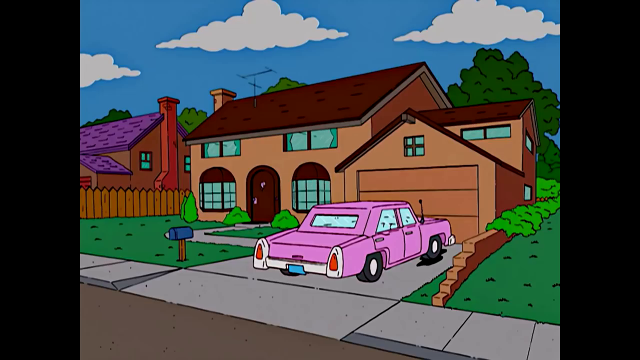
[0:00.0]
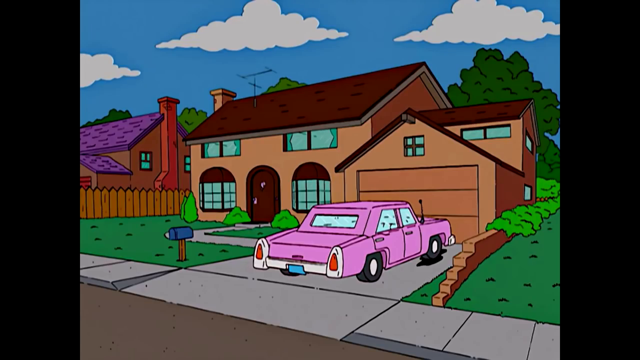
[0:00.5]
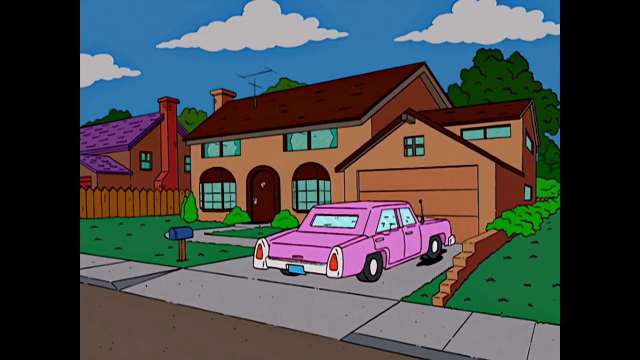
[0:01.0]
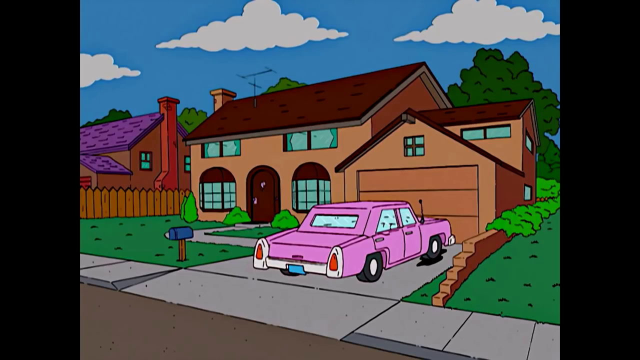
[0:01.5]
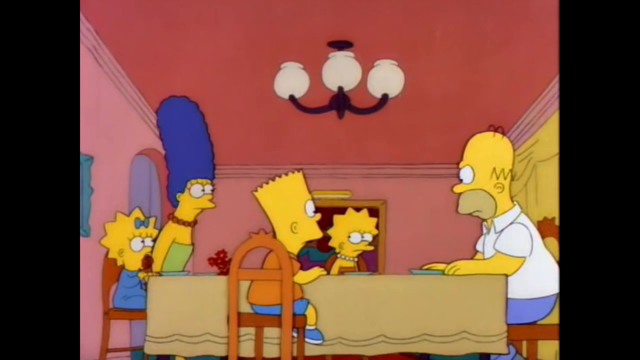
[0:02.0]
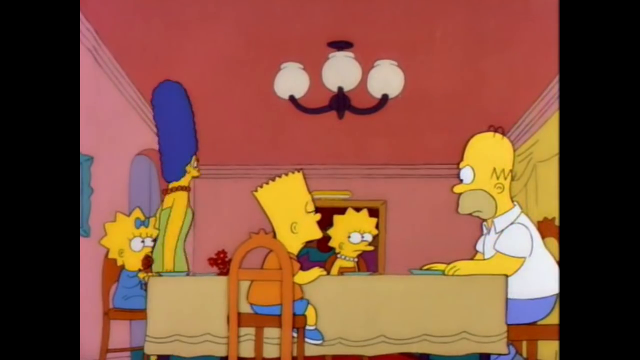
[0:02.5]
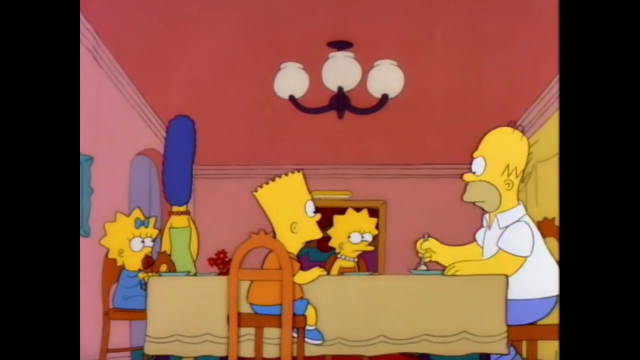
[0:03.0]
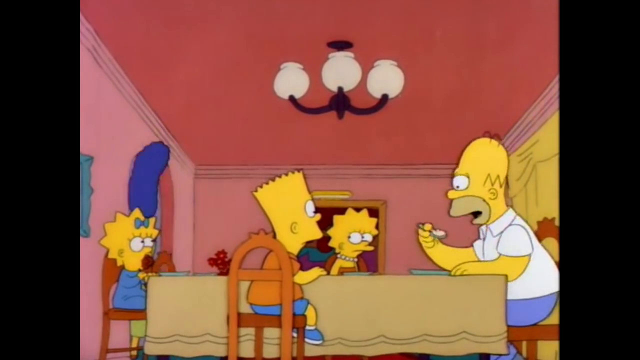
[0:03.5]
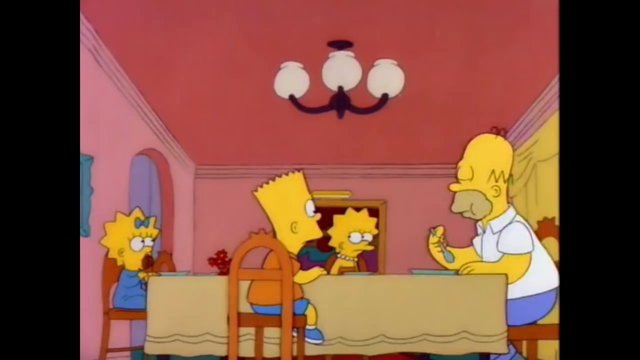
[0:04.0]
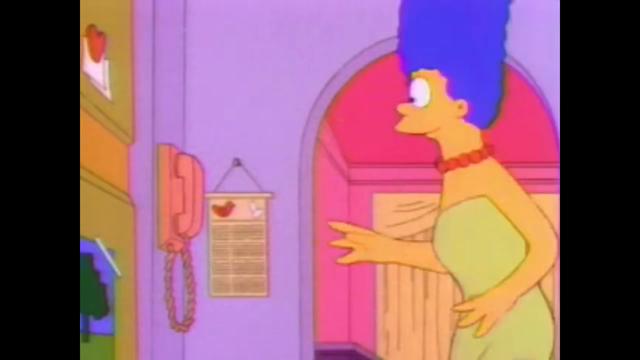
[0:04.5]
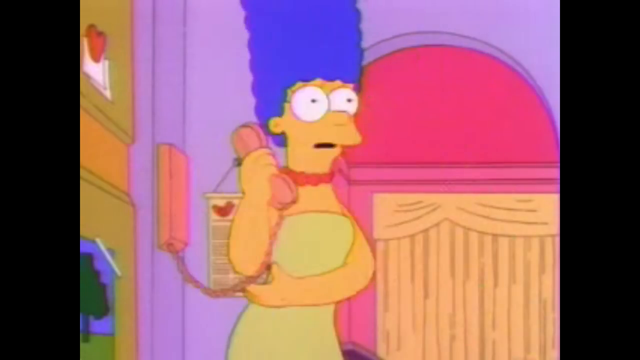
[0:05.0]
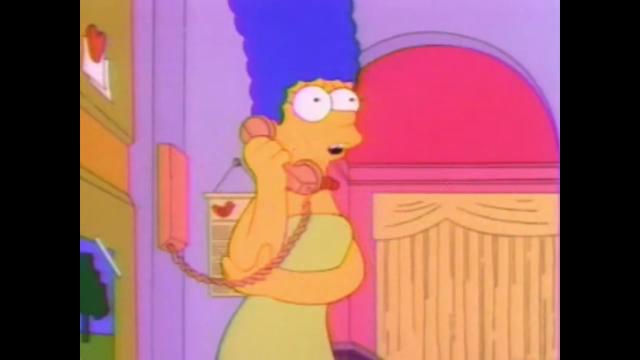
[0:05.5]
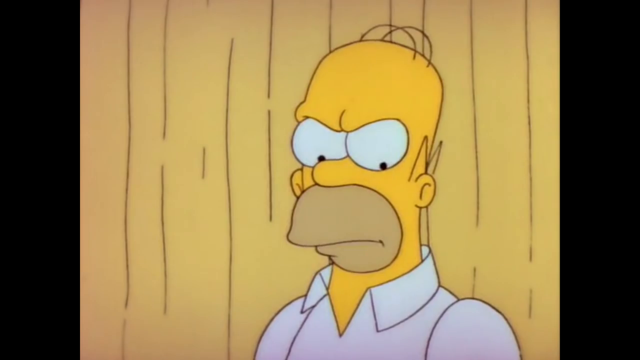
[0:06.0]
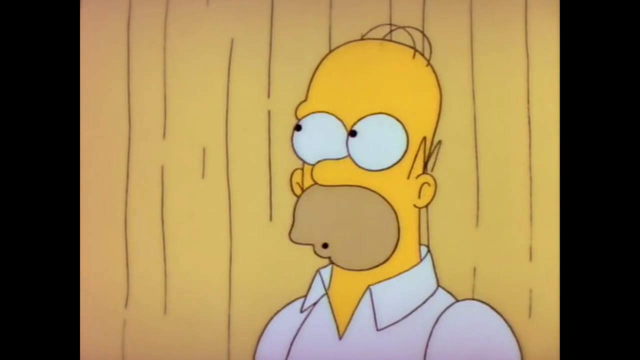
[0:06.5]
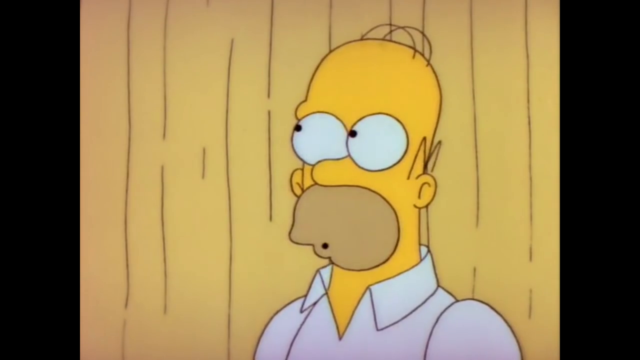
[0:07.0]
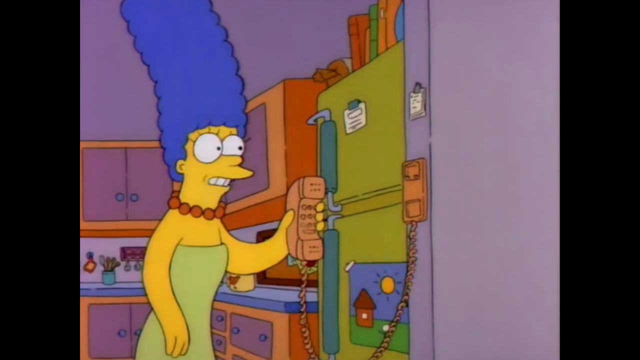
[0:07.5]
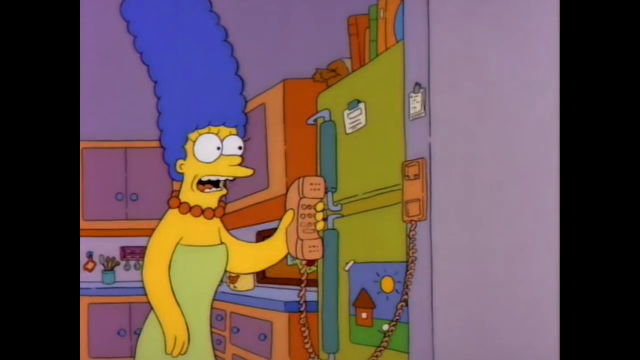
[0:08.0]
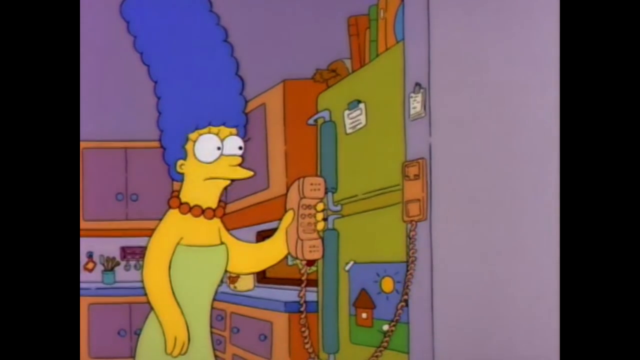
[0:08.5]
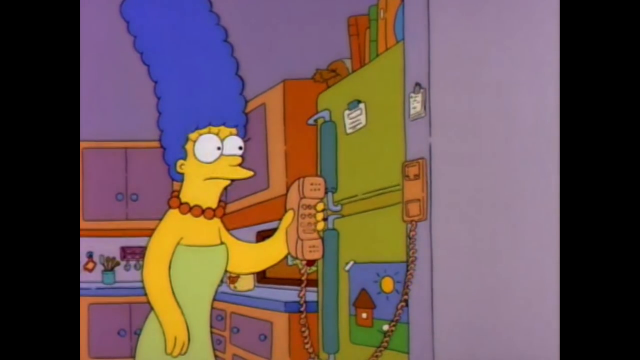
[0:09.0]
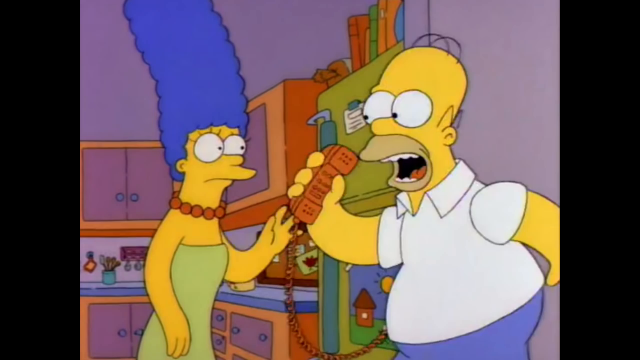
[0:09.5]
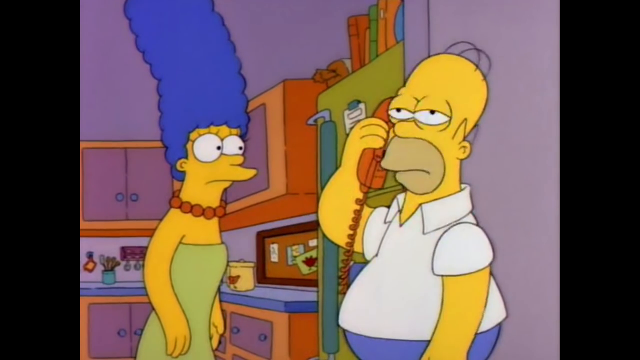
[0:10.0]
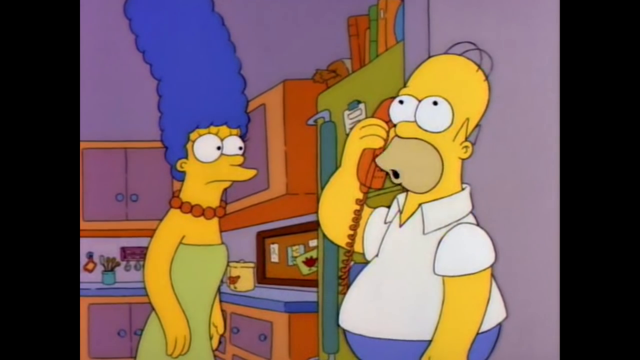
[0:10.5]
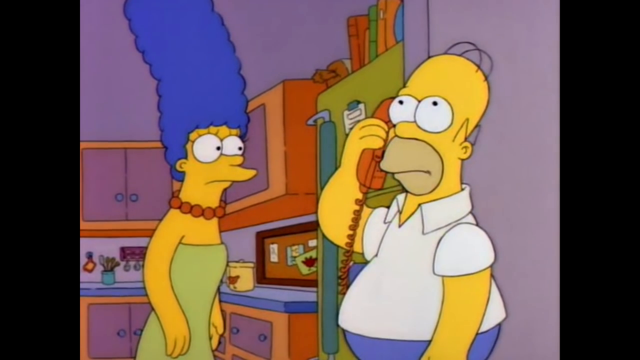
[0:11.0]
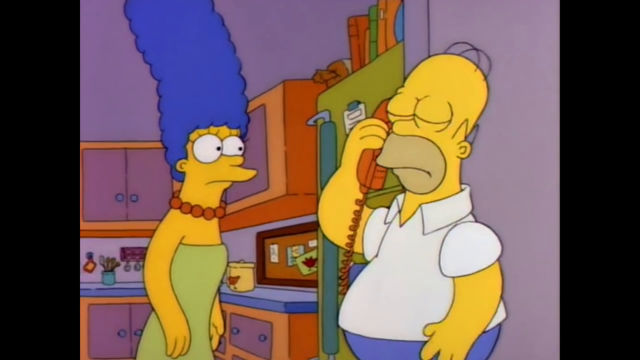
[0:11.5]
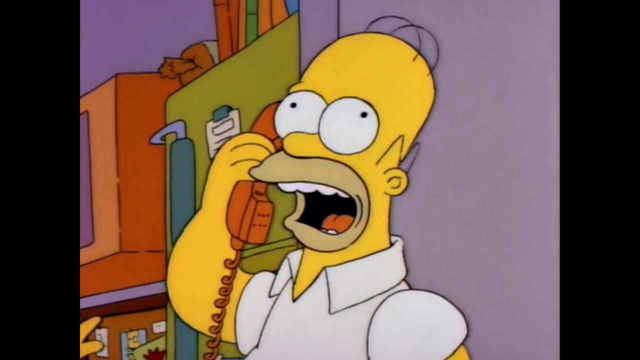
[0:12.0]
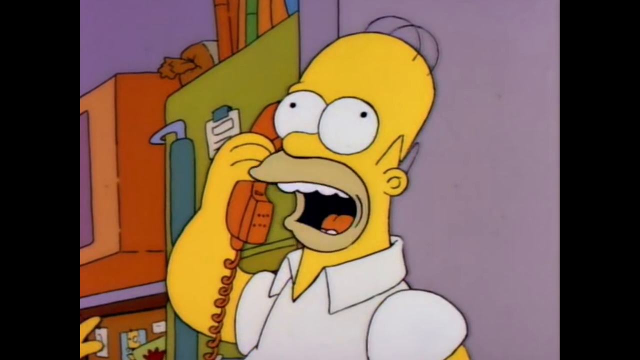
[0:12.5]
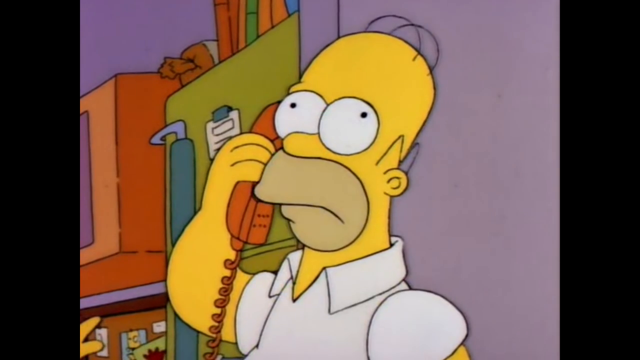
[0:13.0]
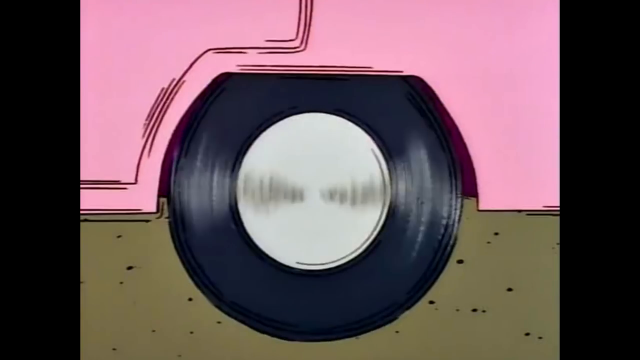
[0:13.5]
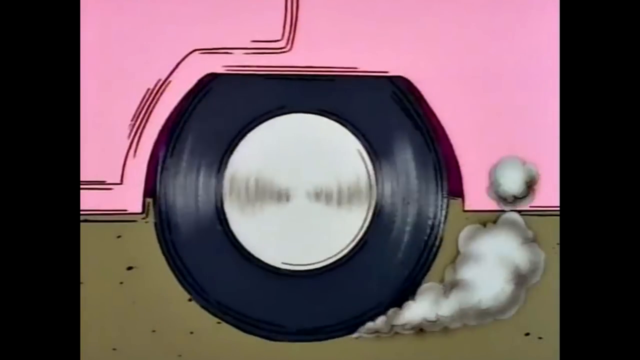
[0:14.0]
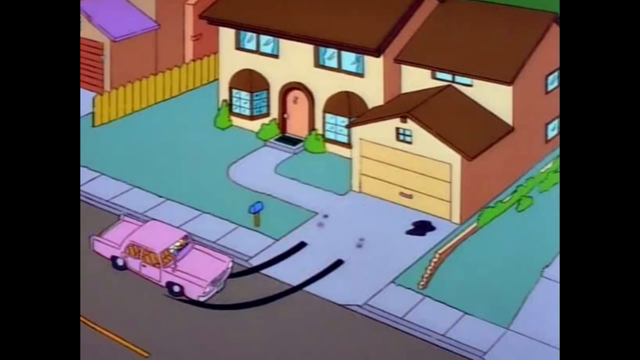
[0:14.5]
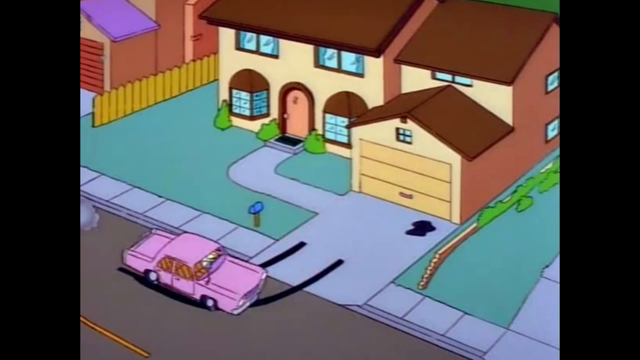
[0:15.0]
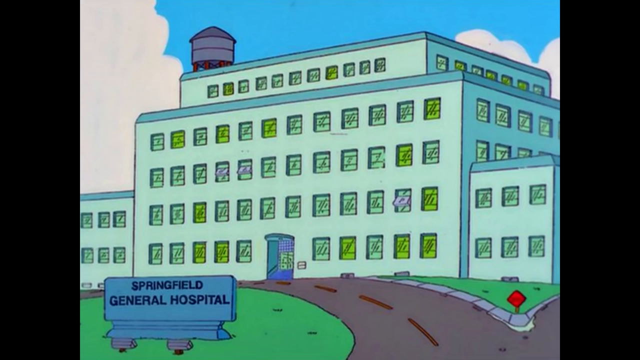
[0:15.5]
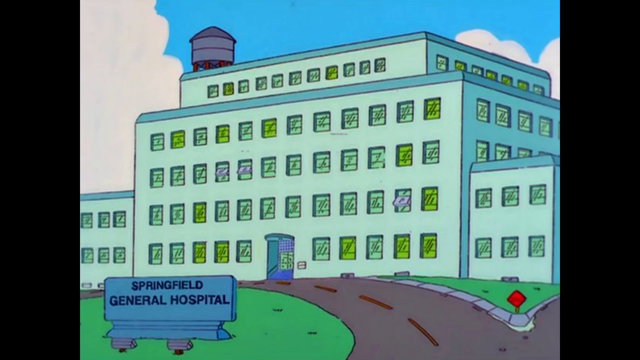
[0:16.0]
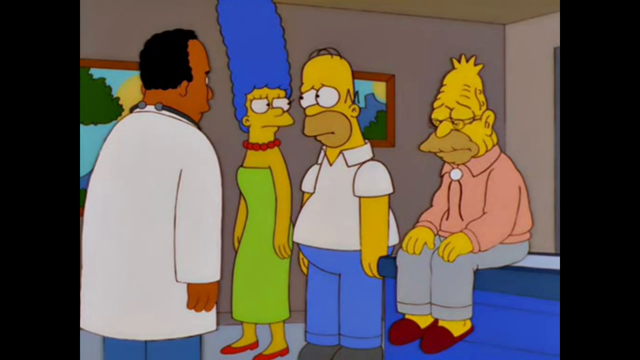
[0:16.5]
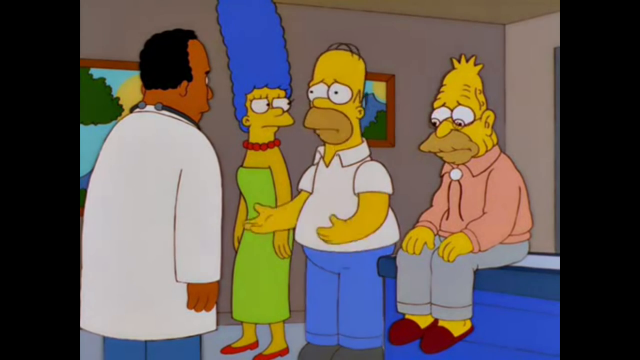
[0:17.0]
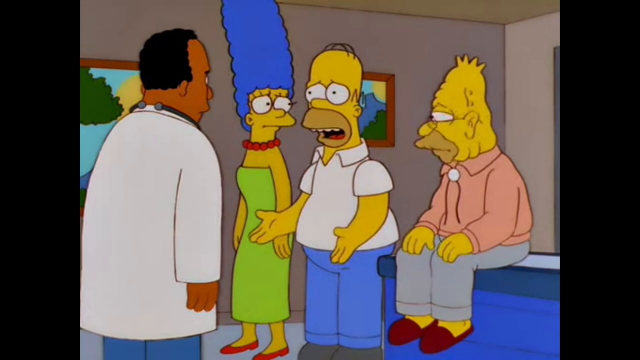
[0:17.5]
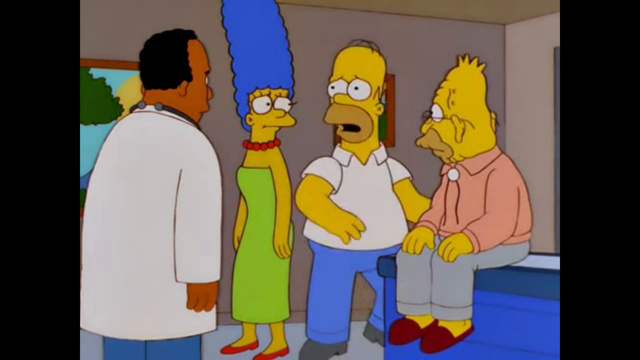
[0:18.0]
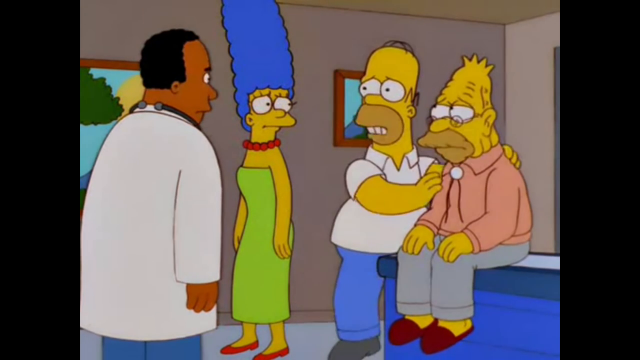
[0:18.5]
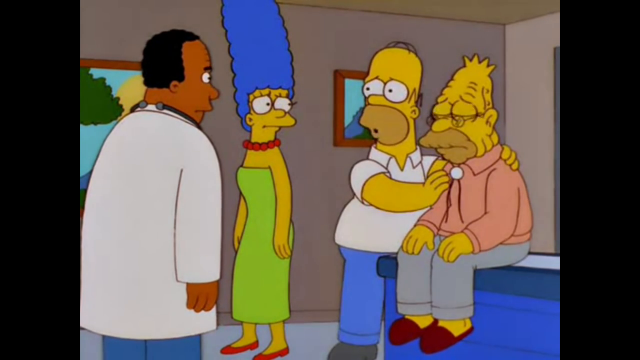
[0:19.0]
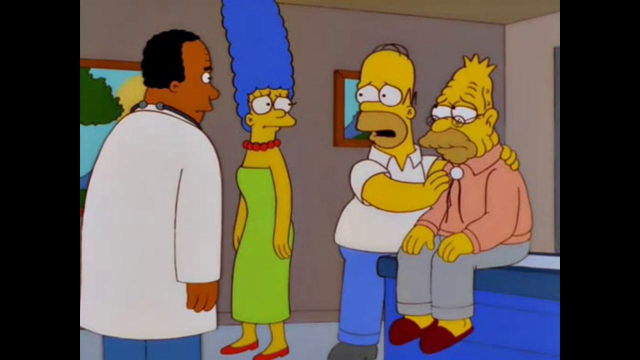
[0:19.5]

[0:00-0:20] The video opens on a colorful neighborhood. On the far left is a house with a purple roof and a red chimney, up against a somewhat orange-colored house with a bit of orange-colored wooden privacy fence around it. The grass in the yard of the main house is very green, and the bushes are a vibrant green. The main house's roof is a dark, rich, chocolatey brown. A car in the driveway is a pinkish-purplish color, maybe lavender but a little more pink, with a blue tag on the back, and its front tires are parked right in an oil spill. A sidewalk runs in front of the house, and a little blue mailbox on a wooden post stands out front. Inside, it is the Simpsons: Homer Simpson is sitting at the table, arguing with Bart and Maggie. Marge runs to the phone and hollers that someone is on the phone for Bart, who gets very excited. He then jumps into the little pink car and rushes to the hospital.